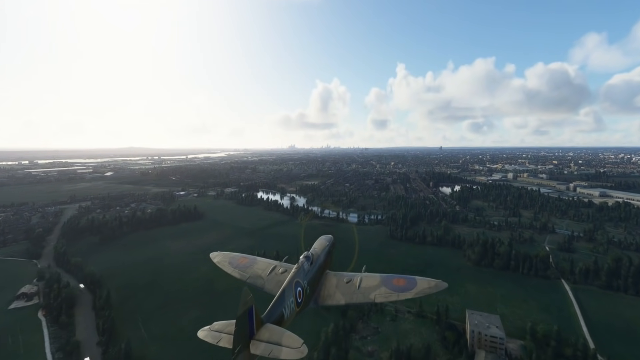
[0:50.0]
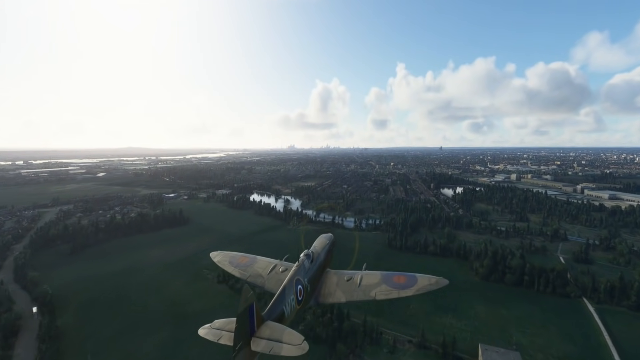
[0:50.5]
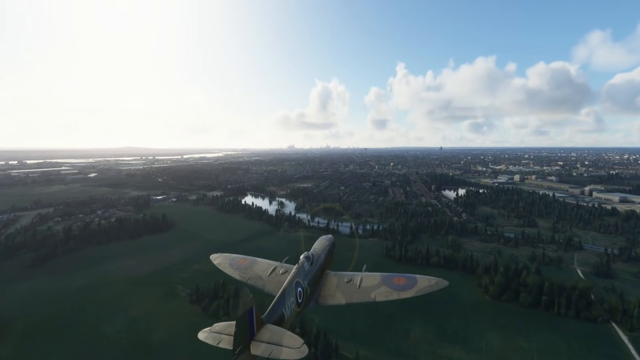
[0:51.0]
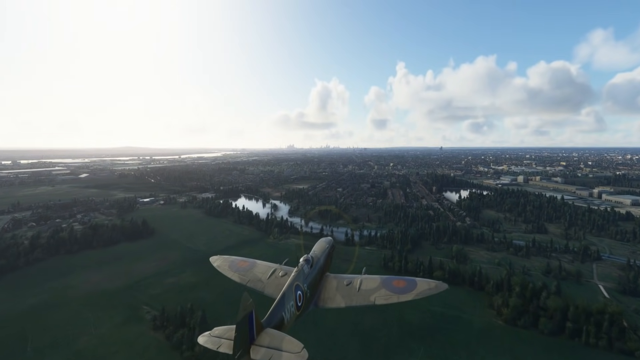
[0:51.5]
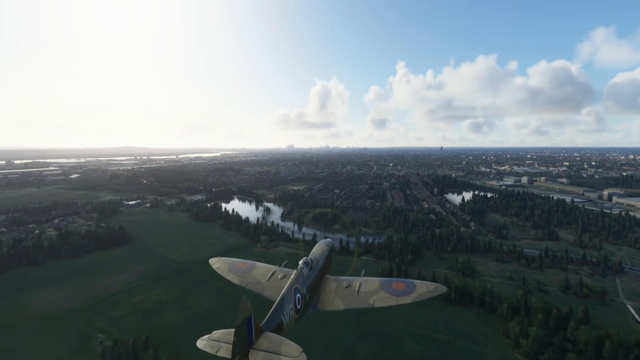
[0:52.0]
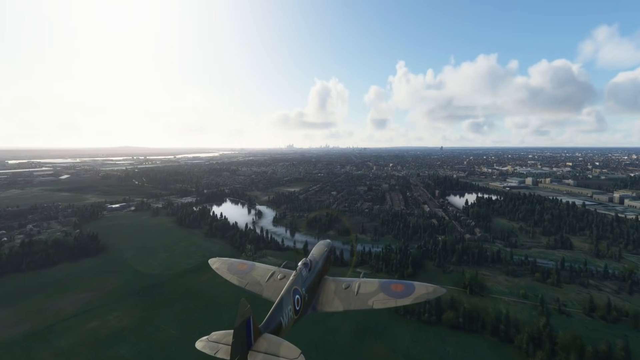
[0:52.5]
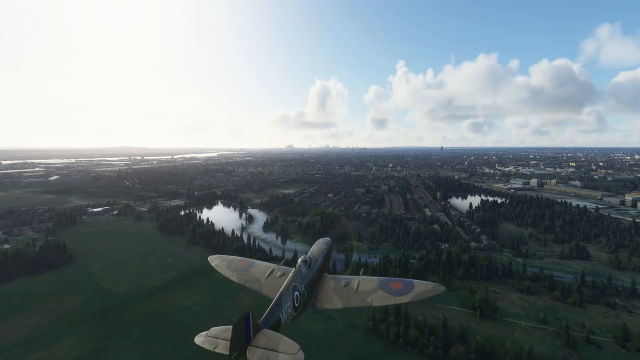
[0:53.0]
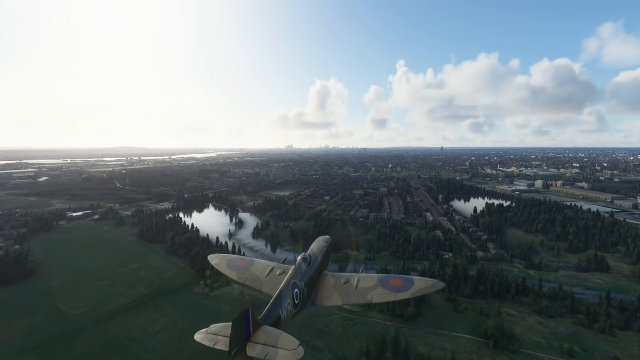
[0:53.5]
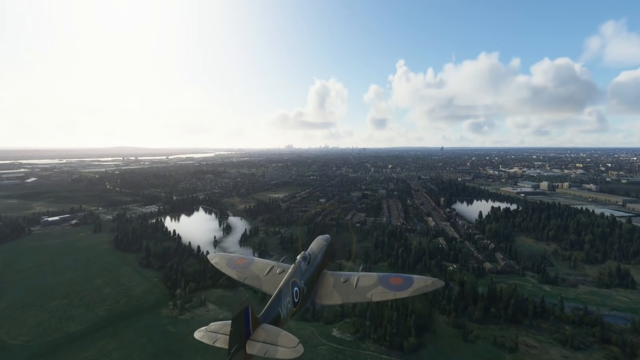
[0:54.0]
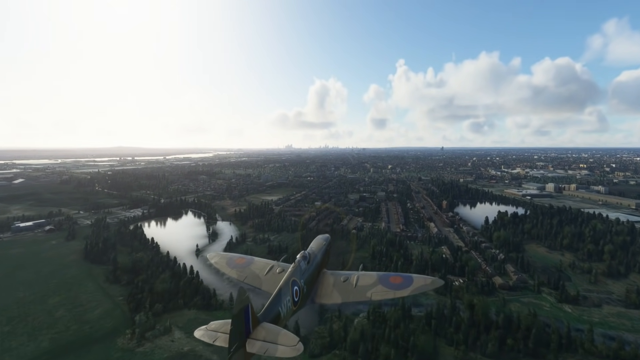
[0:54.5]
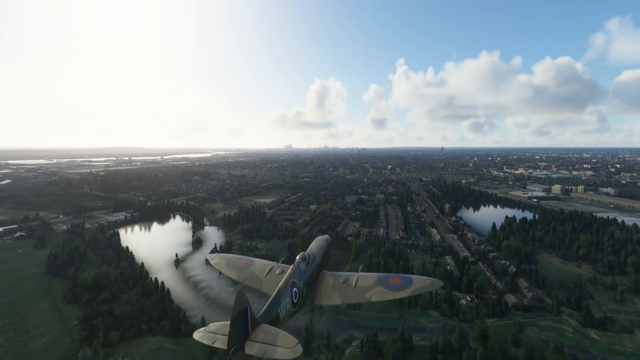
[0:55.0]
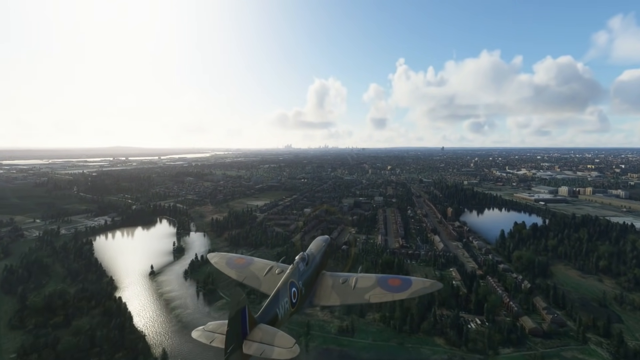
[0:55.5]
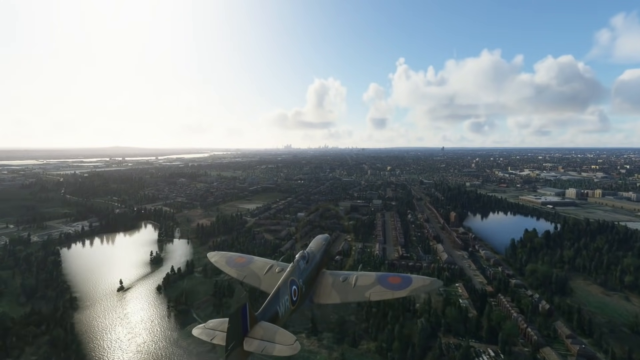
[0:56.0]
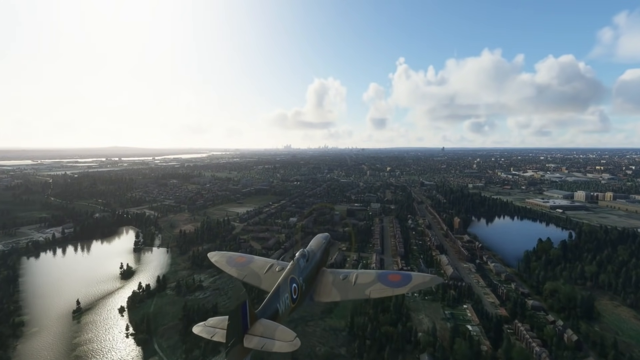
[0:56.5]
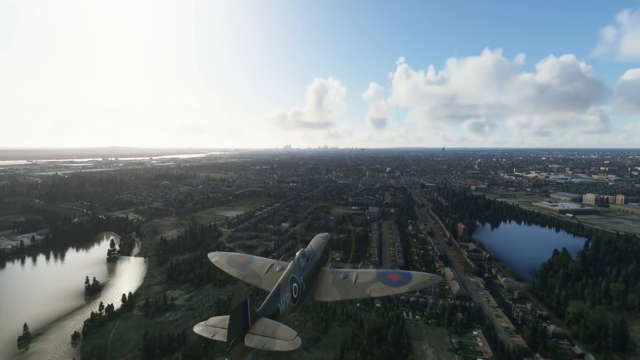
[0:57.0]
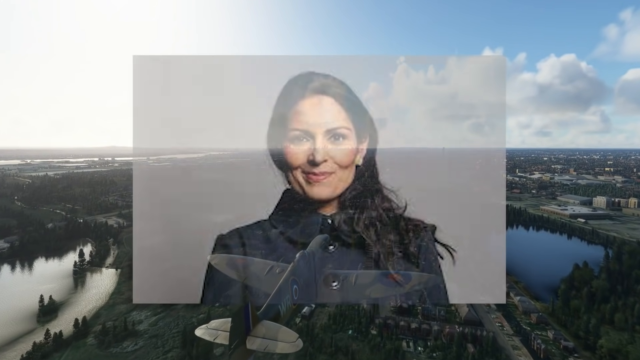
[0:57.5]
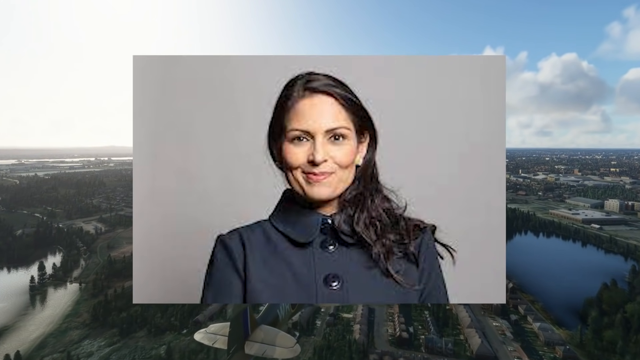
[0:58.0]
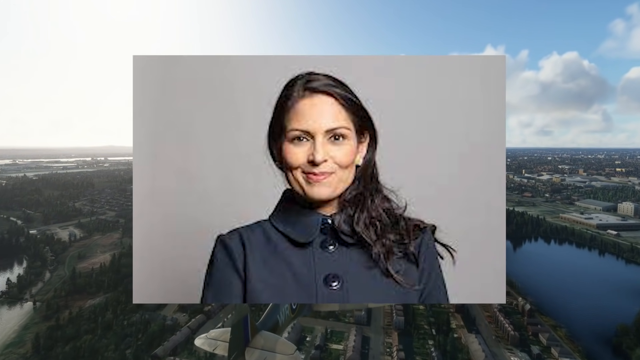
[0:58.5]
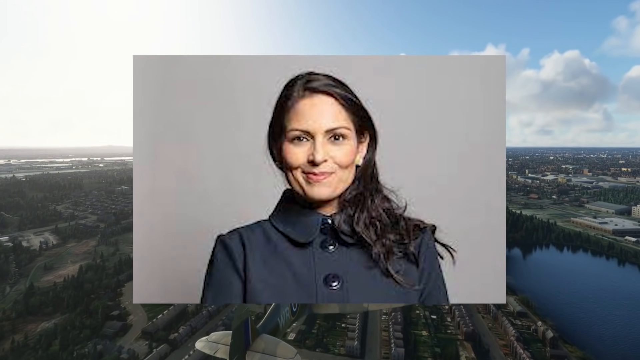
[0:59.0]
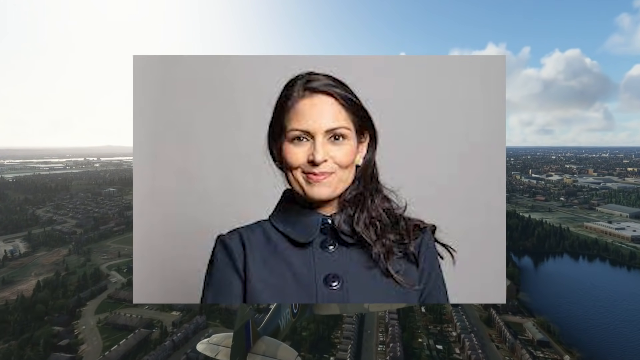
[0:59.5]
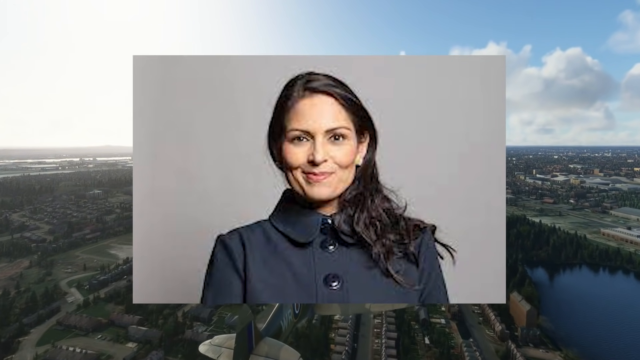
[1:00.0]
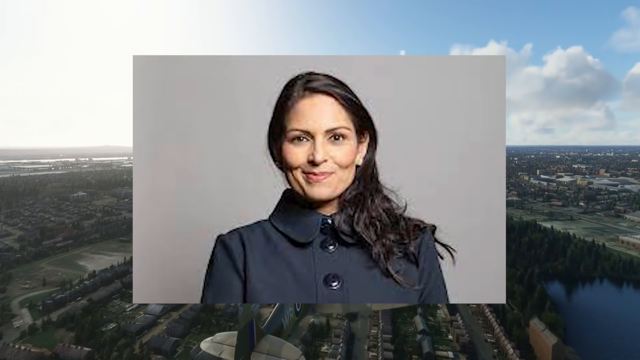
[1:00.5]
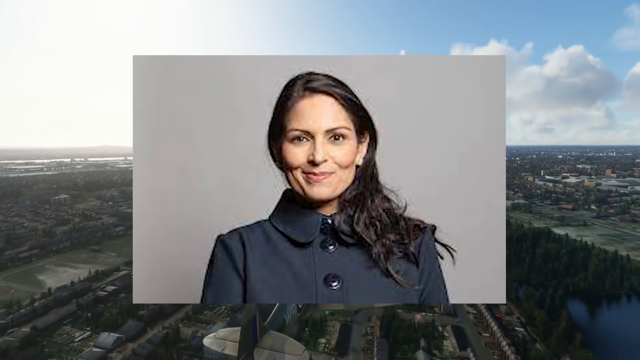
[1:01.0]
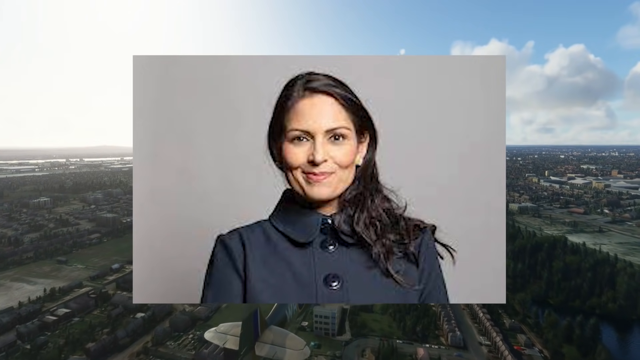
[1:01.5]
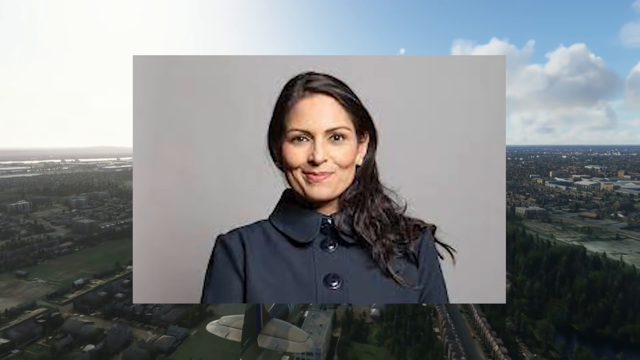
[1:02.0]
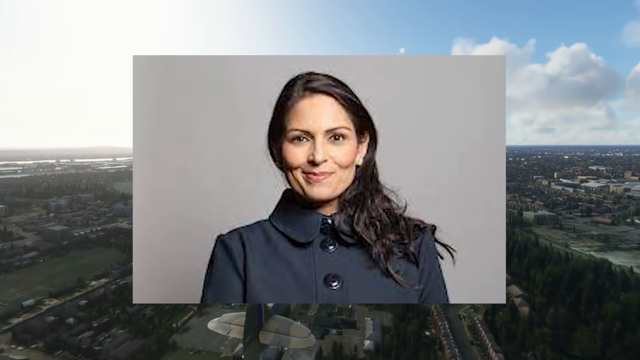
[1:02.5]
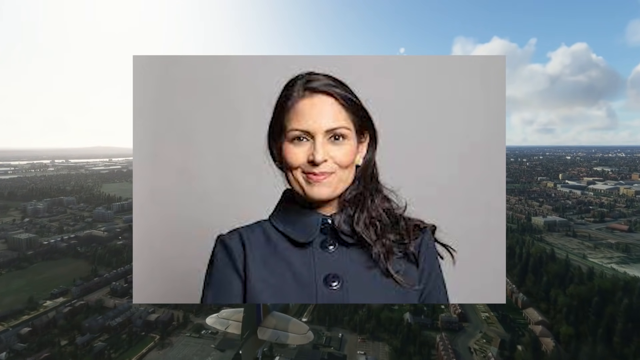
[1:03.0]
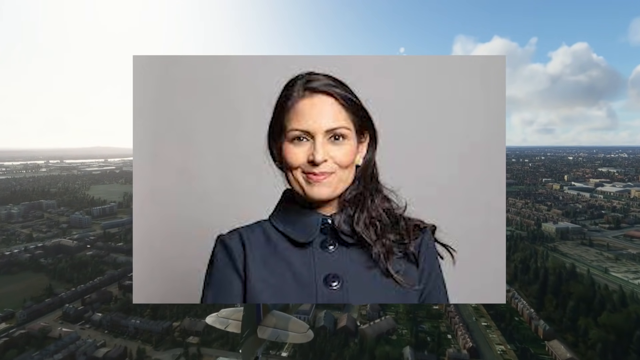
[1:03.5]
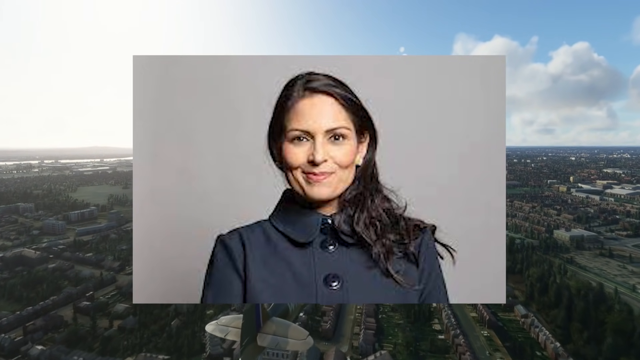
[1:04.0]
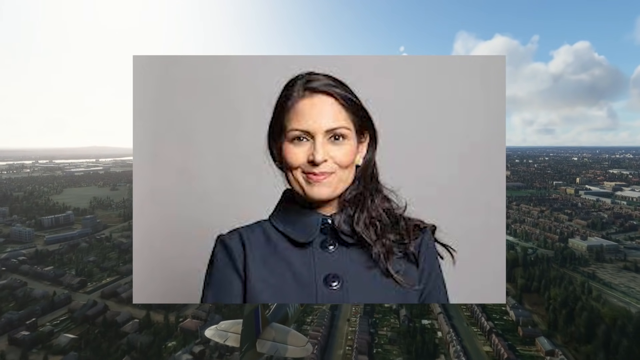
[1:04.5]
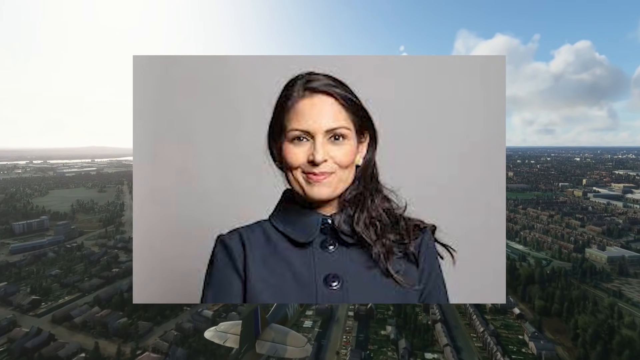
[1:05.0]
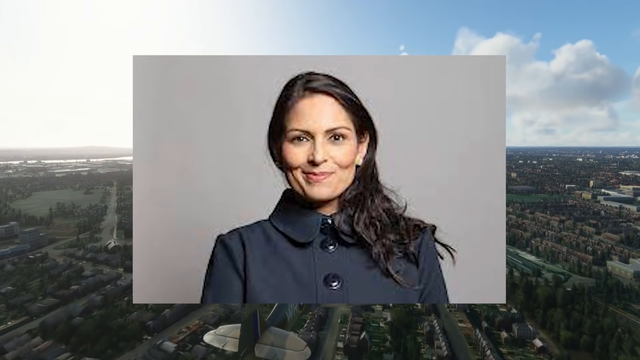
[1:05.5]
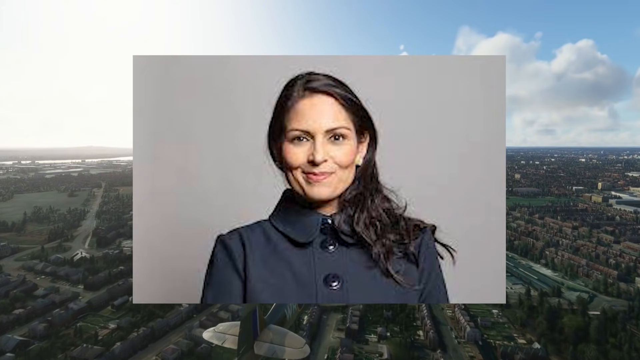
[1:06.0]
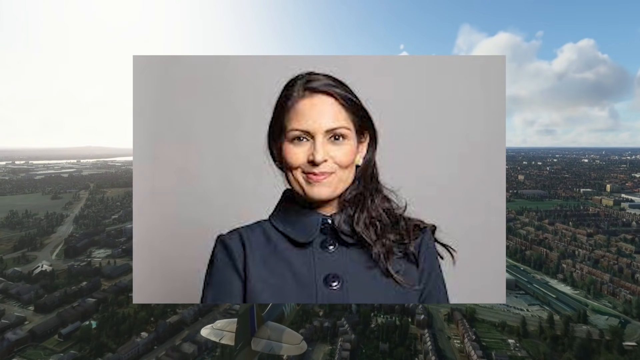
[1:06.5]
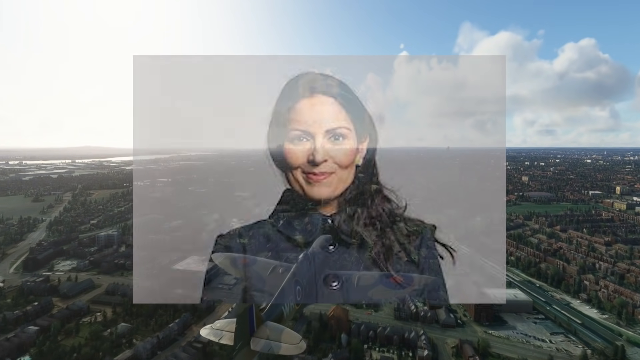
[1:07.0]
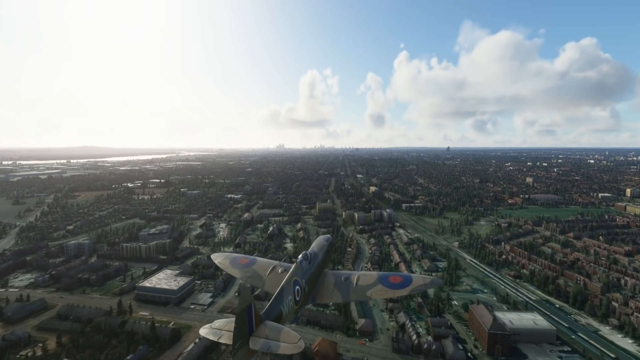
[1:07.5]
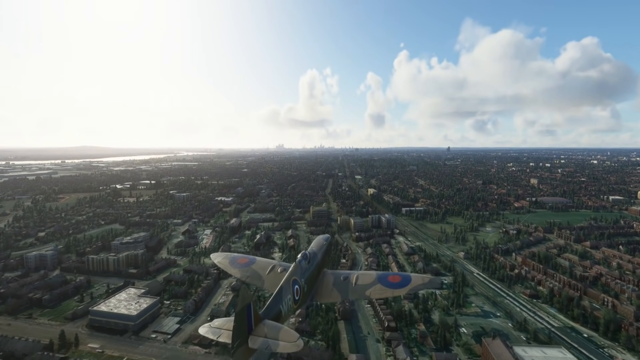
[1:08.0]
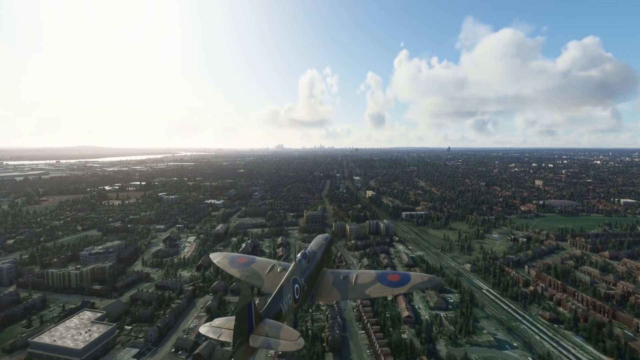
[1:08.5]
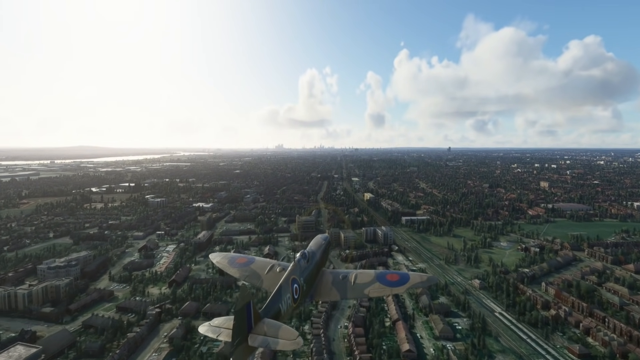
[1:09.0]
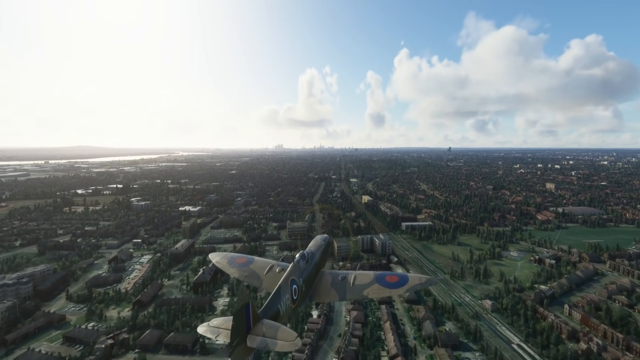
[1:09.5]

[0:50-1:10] In an aerial view, a crop duster type of plane flies with its propeller moving and its wings visible; it is tan with some design on it. It goes over water and land. A picture of a smiling woman pops up; she wears a beautiful jacket with big buttons down the front, and her black hair is pulled over to her shoulder. Her picture remains on screen as the plane flies, and on either side the land below is visible: some water, a few houses and a lot of trees. The sky is blue with some clouds on the right side, while the left side is totally cloud covered and gray. The plane looks like it is flying pretty low, and a lot of detail of the land is visible, showing where the trees and water are.